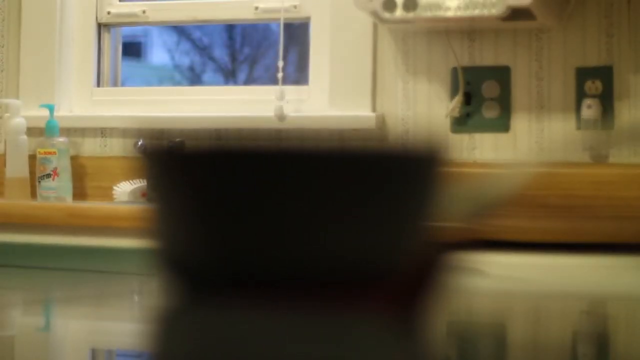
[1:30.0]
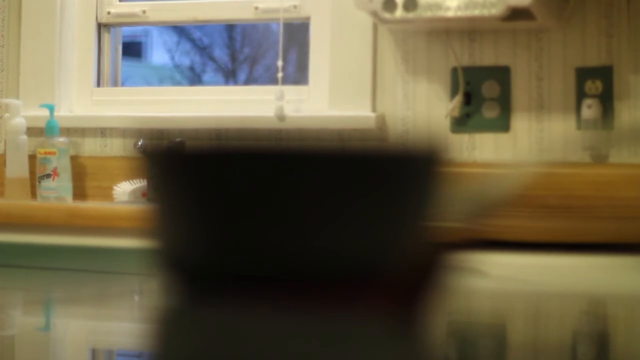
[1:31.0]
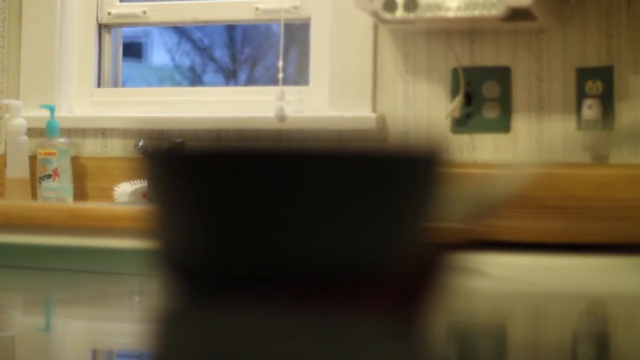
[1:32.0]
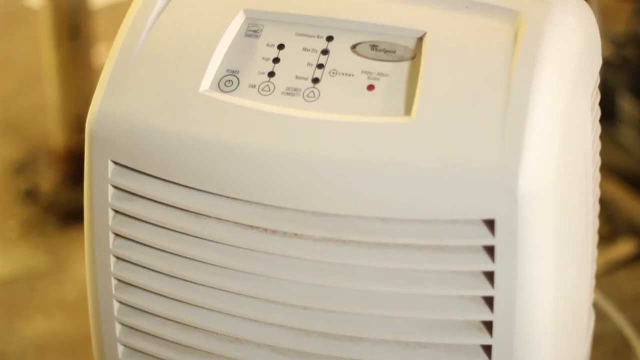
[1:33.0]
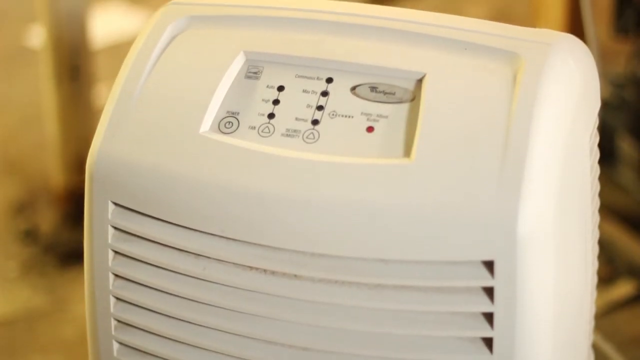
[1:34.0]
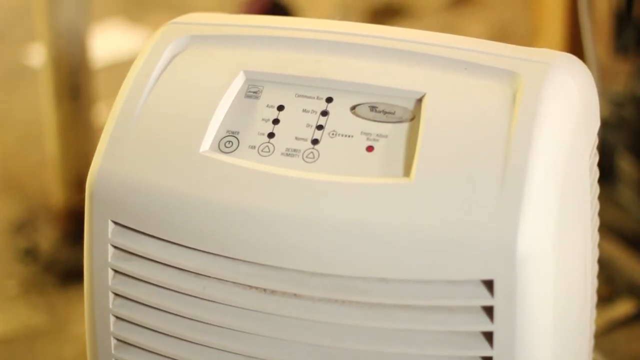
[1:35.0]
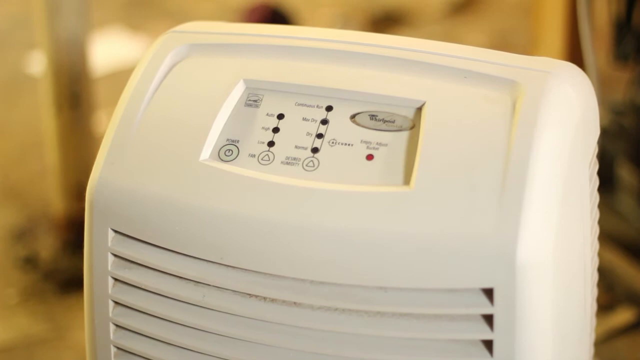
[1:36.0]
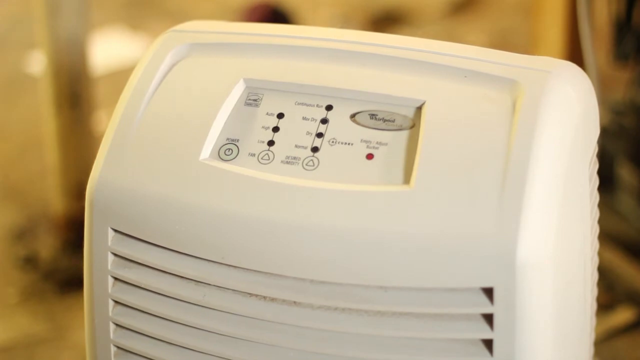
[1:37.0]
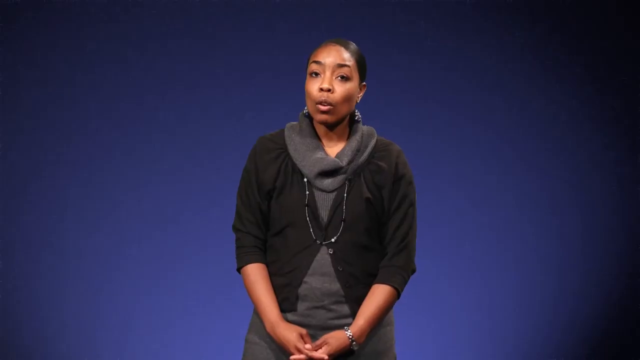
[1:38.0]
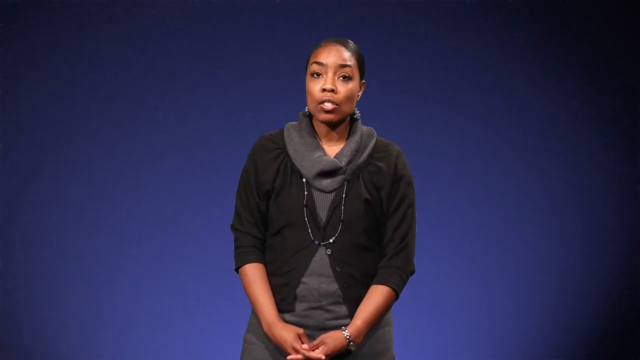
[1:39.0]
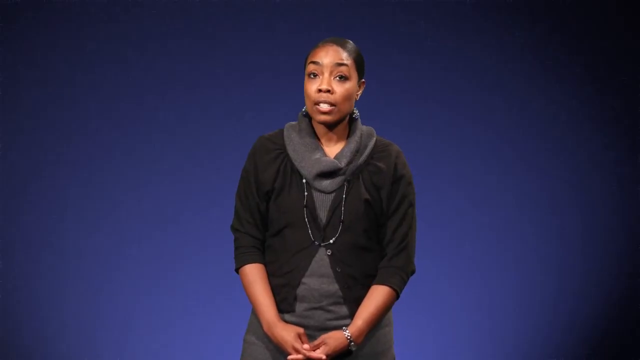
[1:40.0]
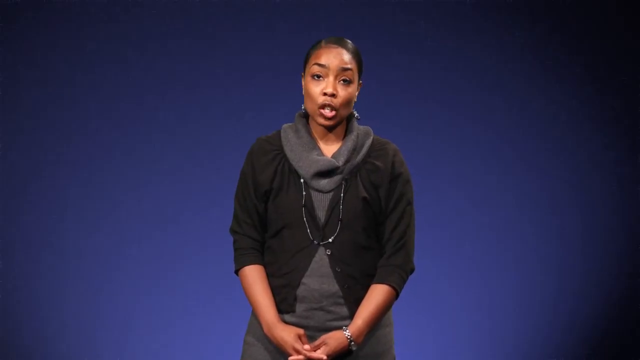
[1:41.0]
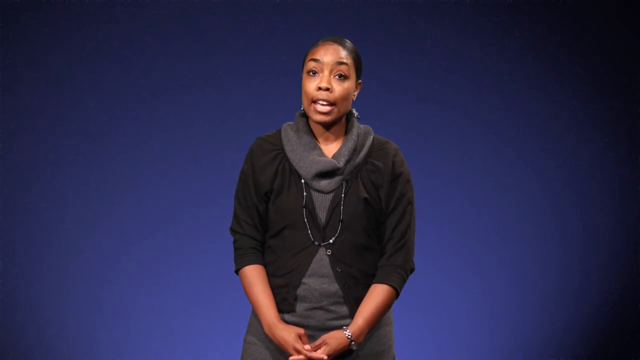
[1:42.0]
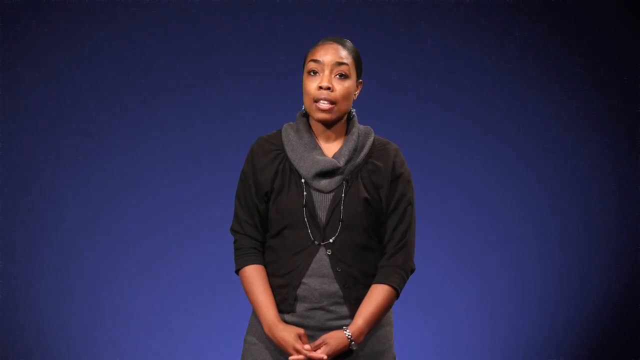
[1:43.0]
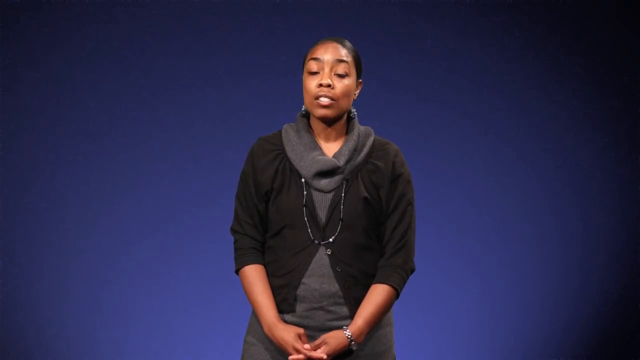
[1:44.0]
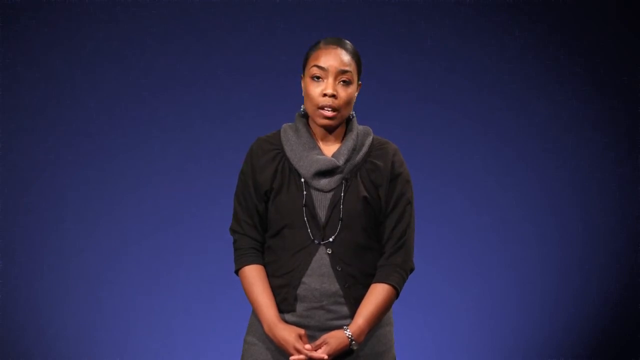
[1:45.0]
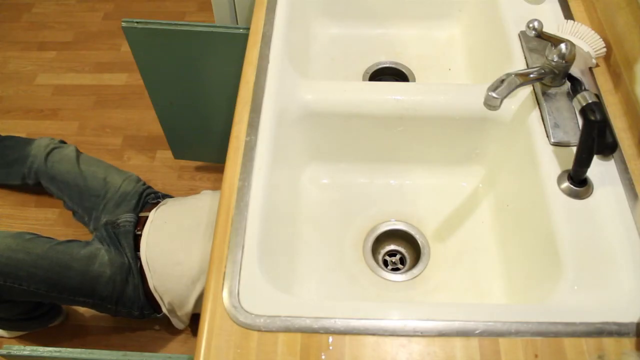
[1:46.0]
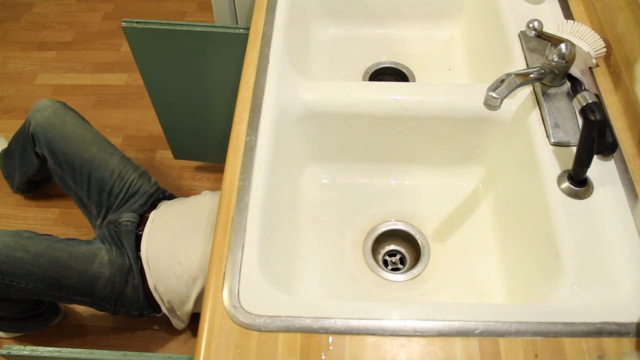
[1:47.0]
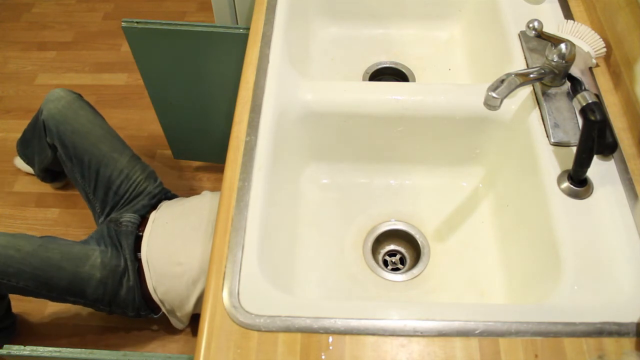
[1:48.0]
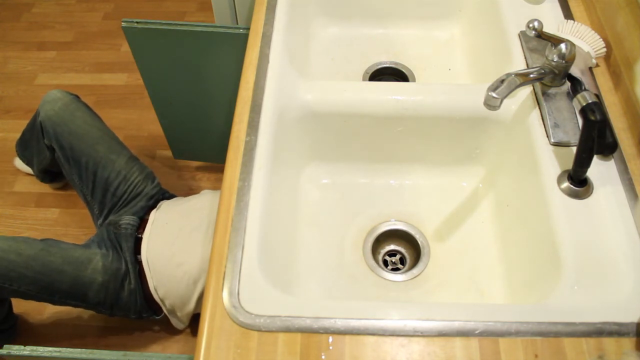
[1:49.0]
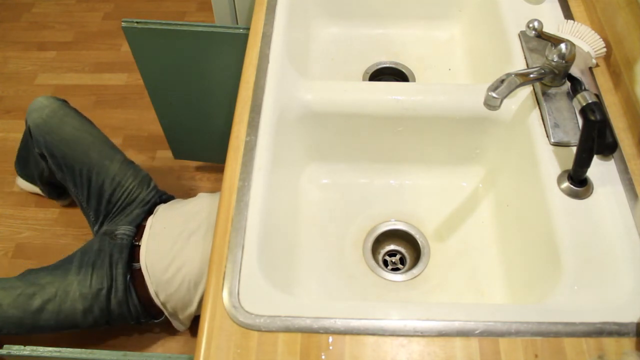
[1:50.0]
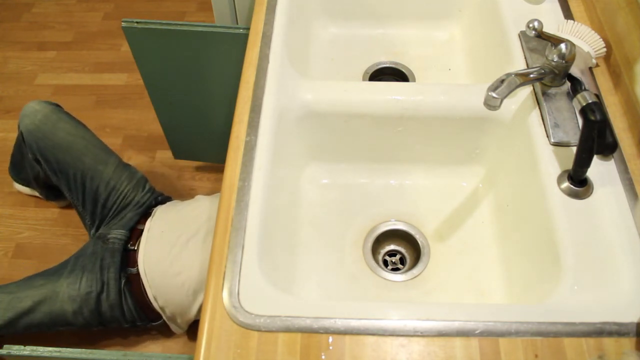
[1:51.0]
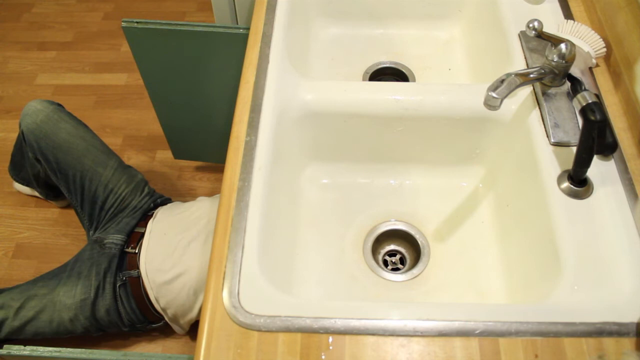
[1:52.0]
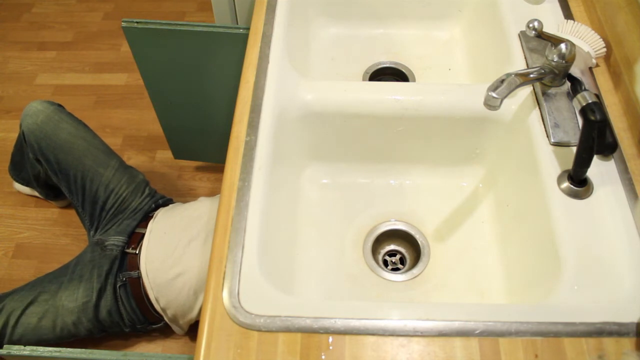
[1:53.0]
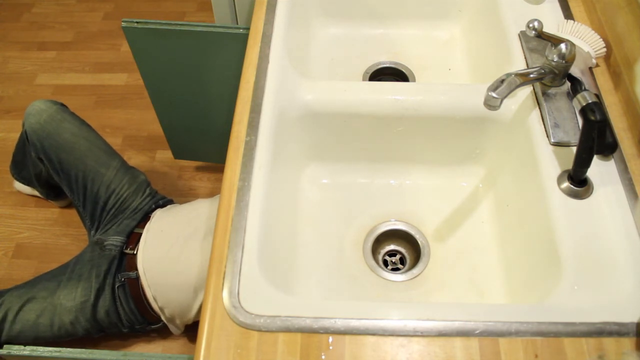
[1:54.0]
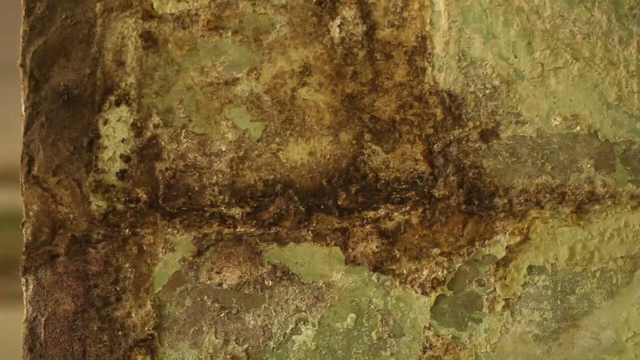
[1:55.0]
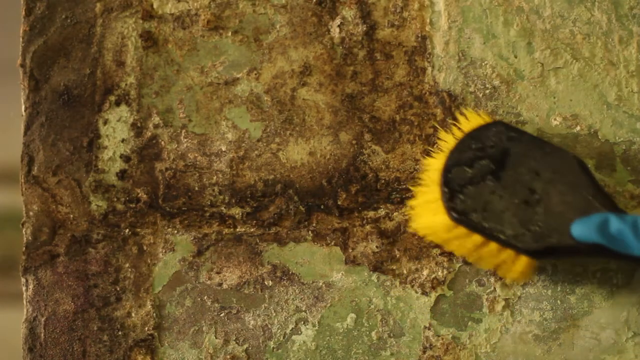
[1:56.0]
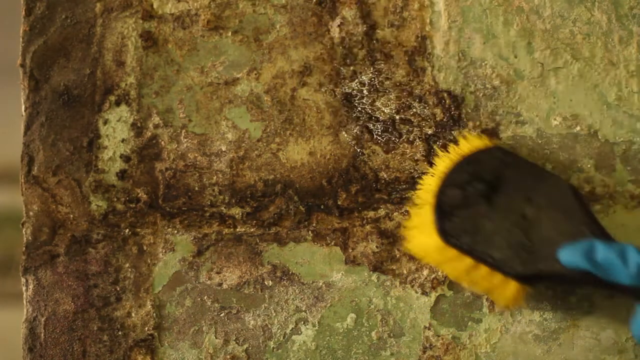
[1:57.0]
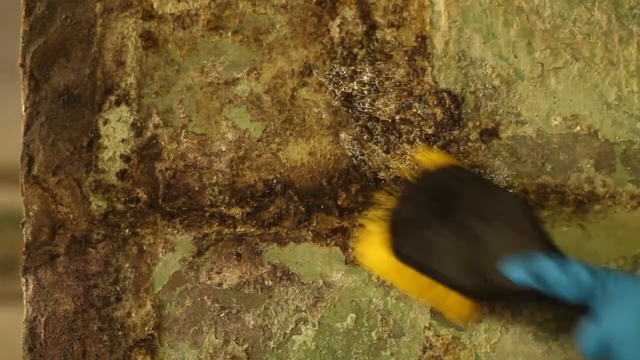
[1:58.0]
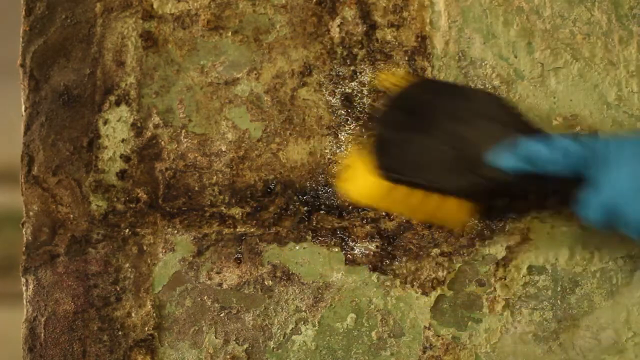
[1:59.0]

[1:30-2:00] What seems to be an air purifier is shown for a brief second. An African-American woman in a black cardigan sweater then sits in front of a purple background with a black vignette around the edges of the screen, speaking. The video cuts to a kitchen, where a man's body extends out from underneath the kitchen sink cabinet on the left, as though he is working underneath the sink; only his jeans, sock-covered feet, white t-shirt and belt are visible. Next to him a green door is open. Above the sink, at the very right of the image, is a shiny metal faucet, and next to it there seems to be a dish brush and maybe a soap dispenser or a water sprayer. The sink has two compartments, each with its own drain, separated by a ceramic wall. The man moves around a bit as he works. Then a brush scrubs a green and brown surface, looking like it is cleaning some decay off the wall.